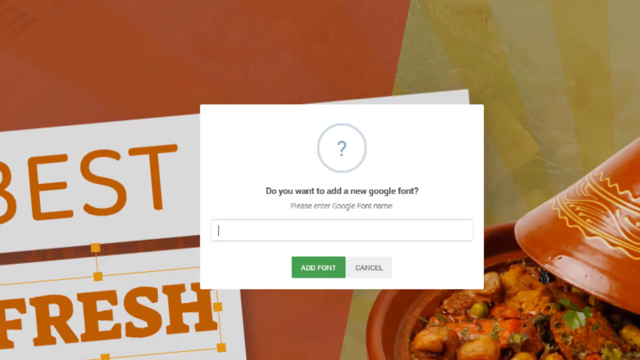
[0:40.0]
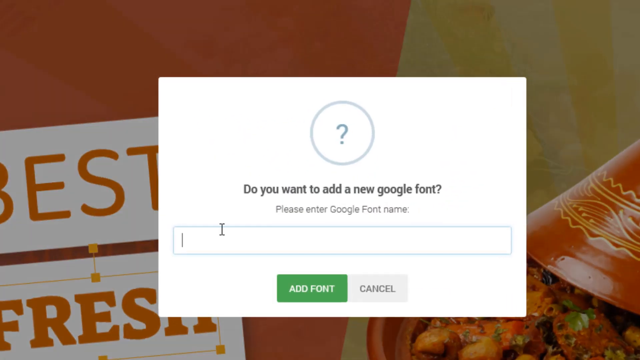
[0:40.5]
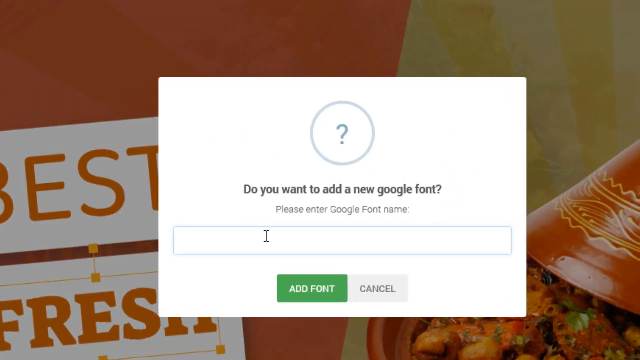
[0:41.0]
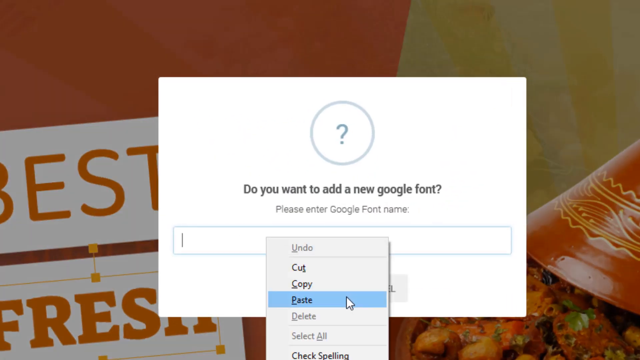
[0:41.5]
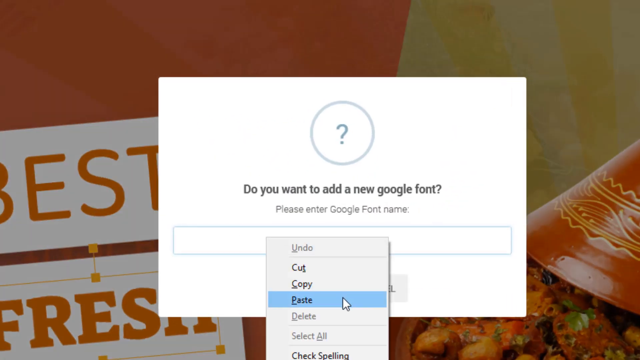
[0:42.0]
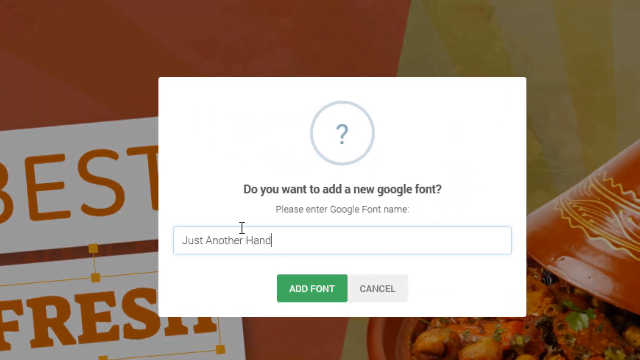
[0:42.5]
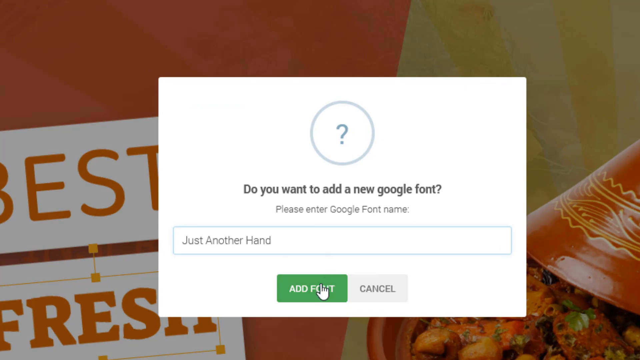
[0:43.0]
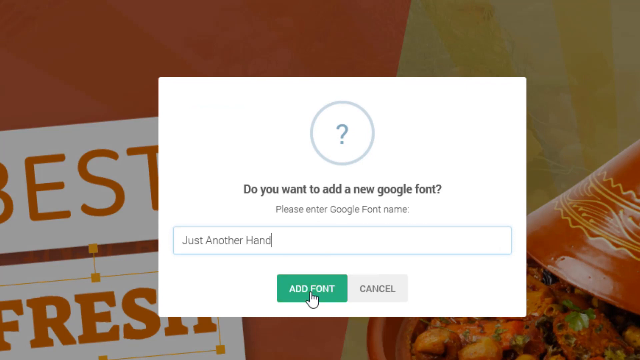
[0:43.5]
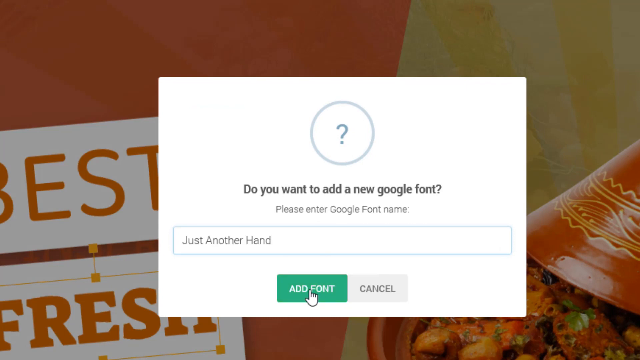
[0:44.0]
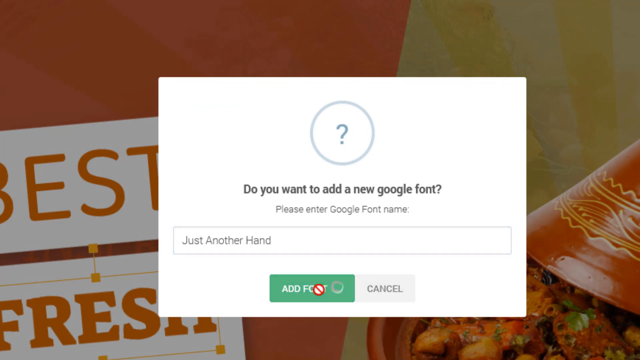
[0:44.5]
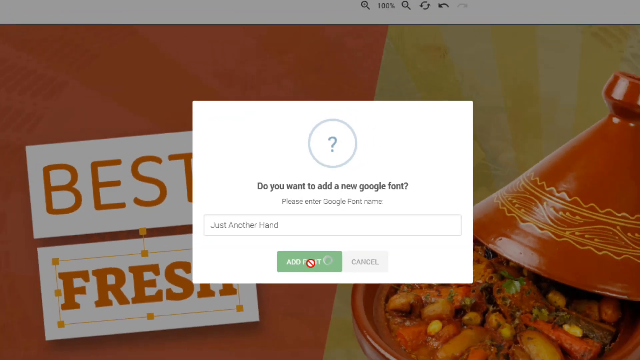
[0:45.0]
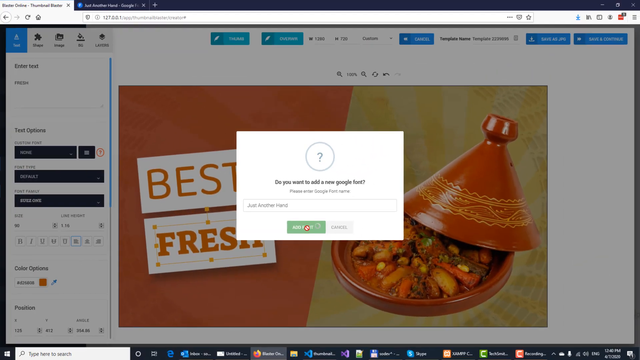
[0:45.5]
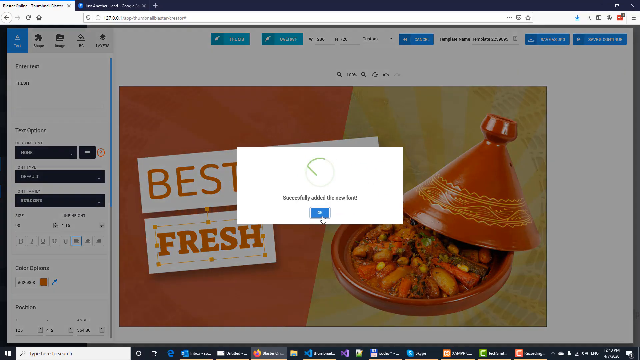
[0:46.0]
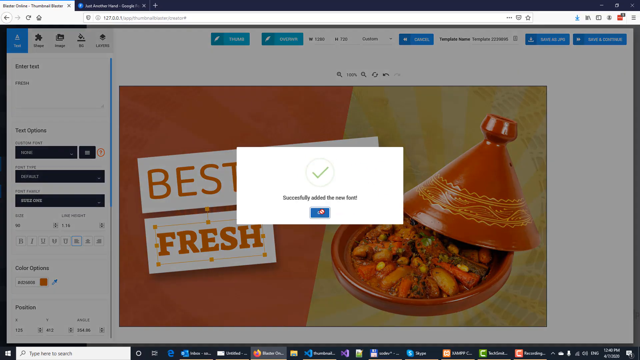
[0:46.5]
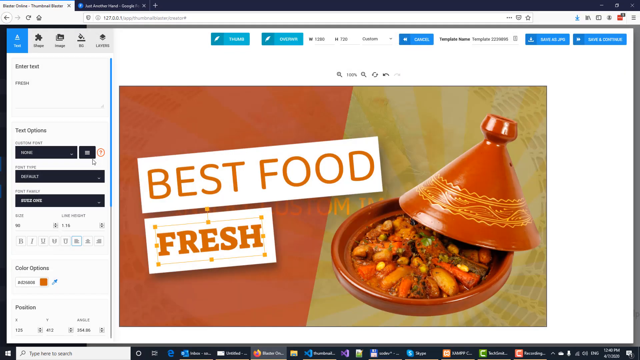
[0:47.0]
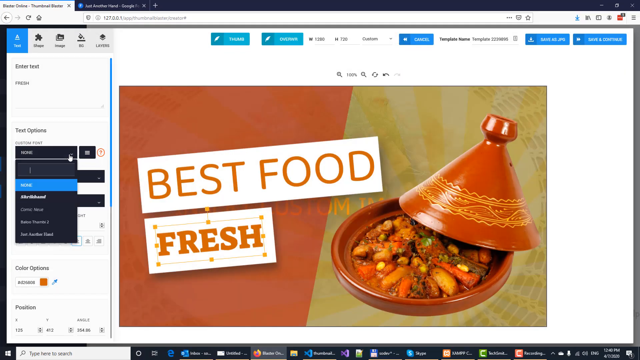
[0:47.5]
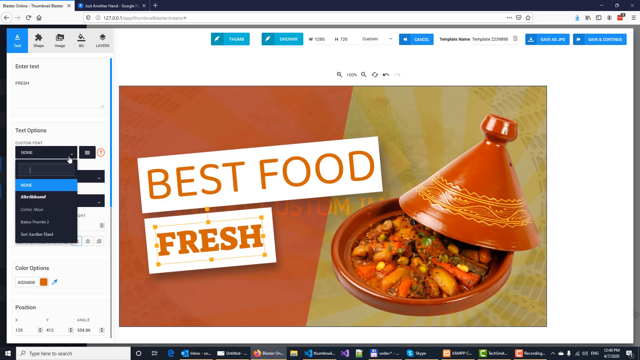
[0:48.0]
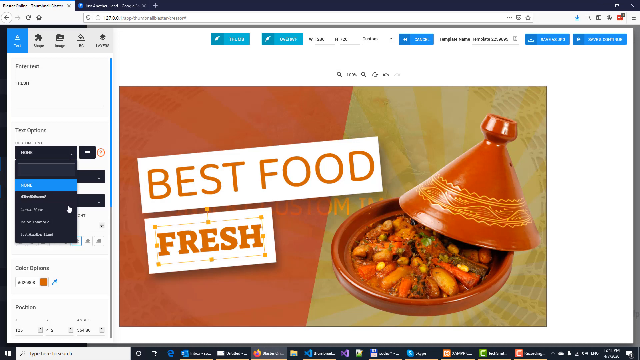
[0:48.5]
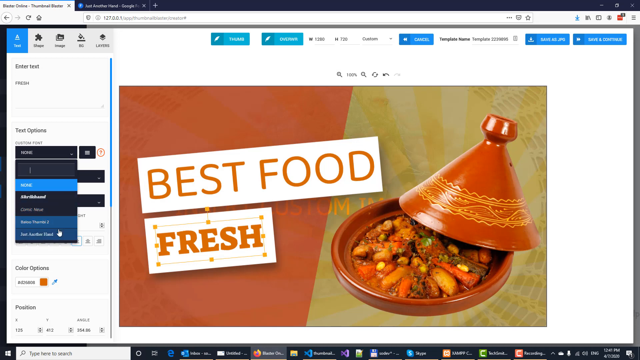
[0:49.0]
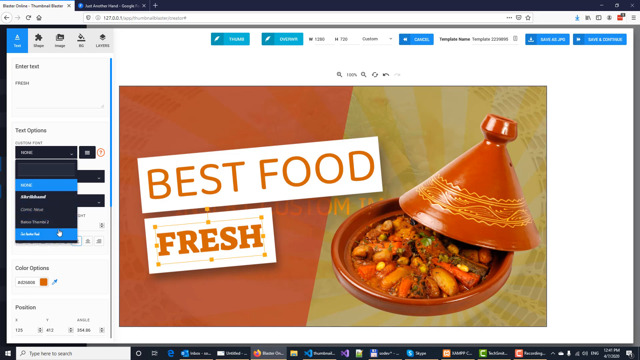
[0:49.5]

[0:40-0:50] After adding a new Google font is clicked, the view zooms in on a pop-up that reads "do you want to add a new Google font? Please enter a Google font name." The user clicks the input field and pastes in "just another hand," then clicks add. The web page is then shown from afar, making it somewhat hard to tell what is happening at the side of the screen, but the user appears to click the custom font tab, which opens a small pull-out window of custom font options.